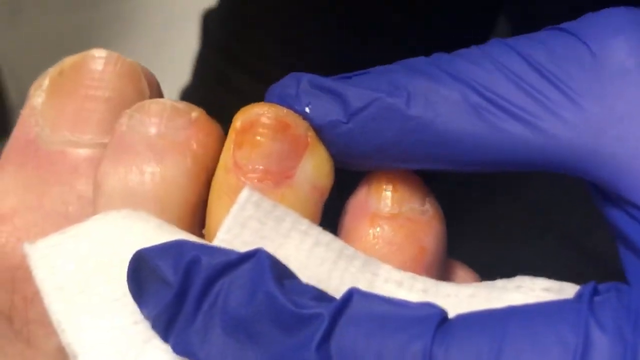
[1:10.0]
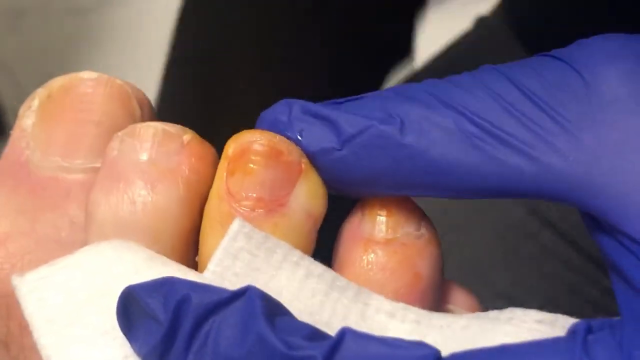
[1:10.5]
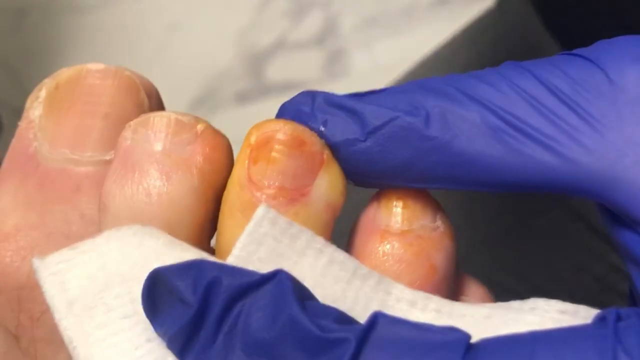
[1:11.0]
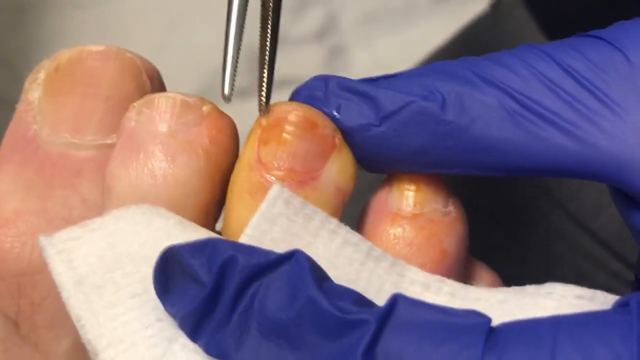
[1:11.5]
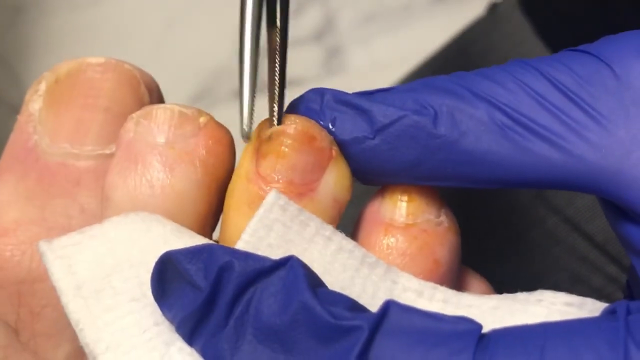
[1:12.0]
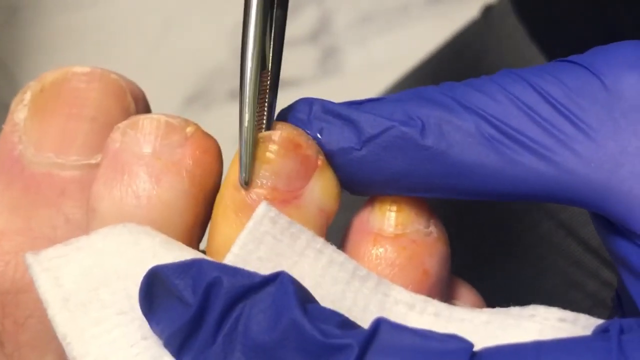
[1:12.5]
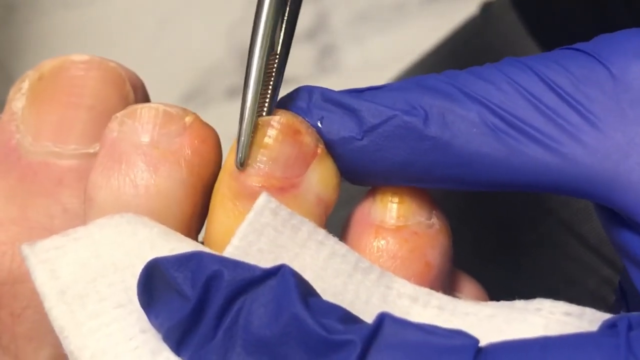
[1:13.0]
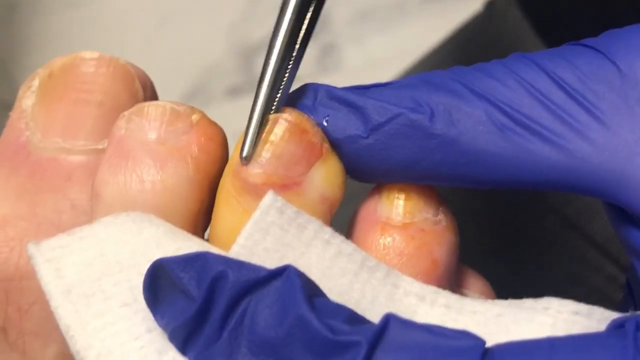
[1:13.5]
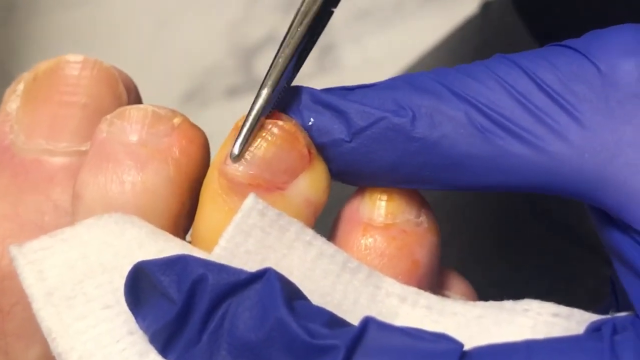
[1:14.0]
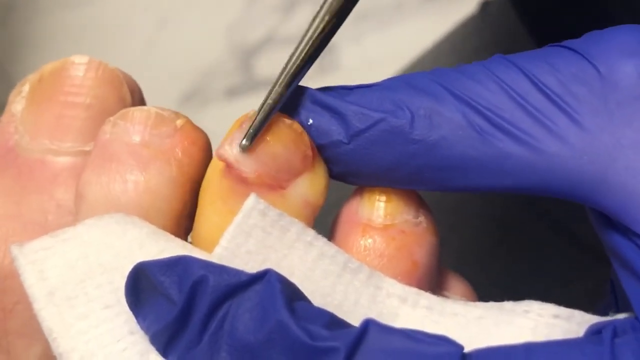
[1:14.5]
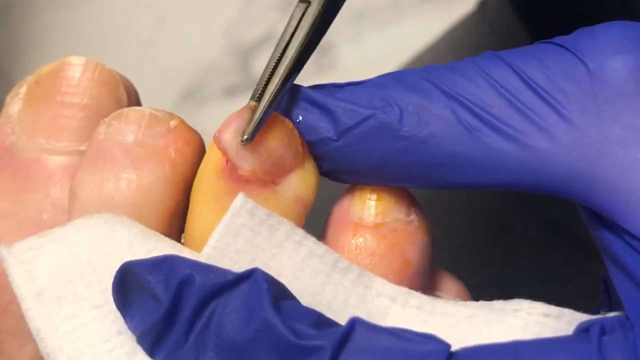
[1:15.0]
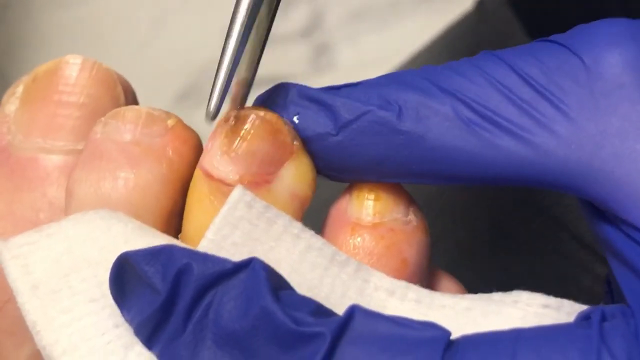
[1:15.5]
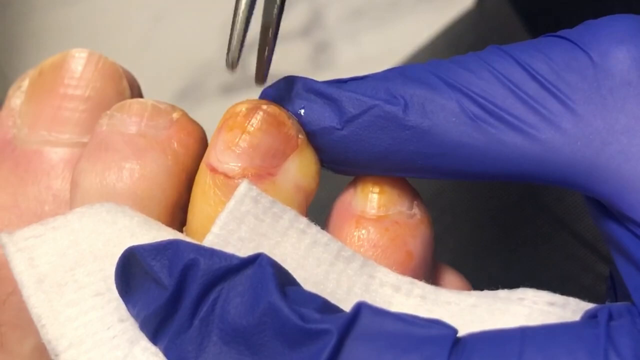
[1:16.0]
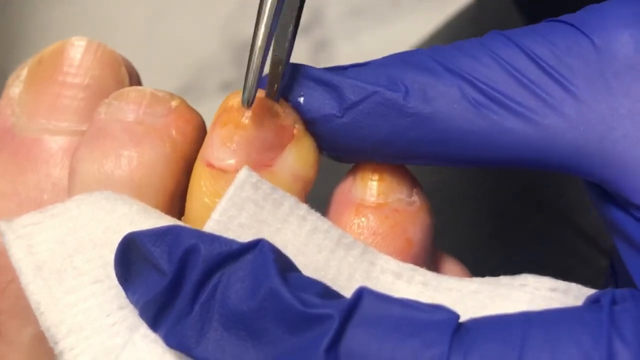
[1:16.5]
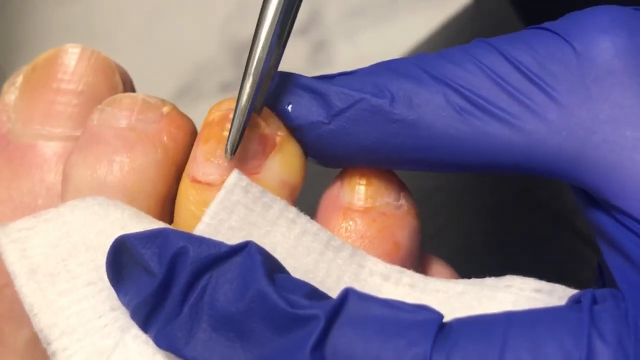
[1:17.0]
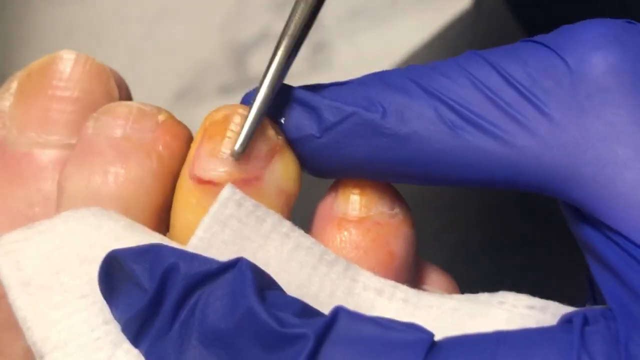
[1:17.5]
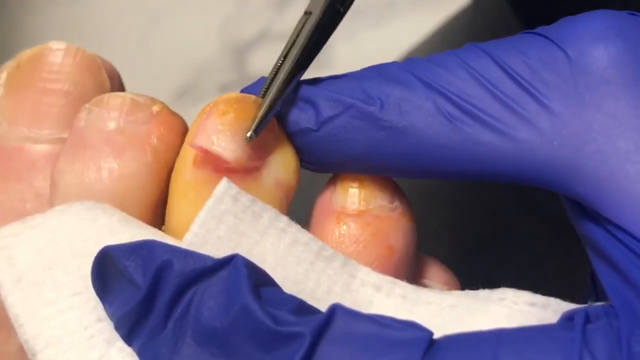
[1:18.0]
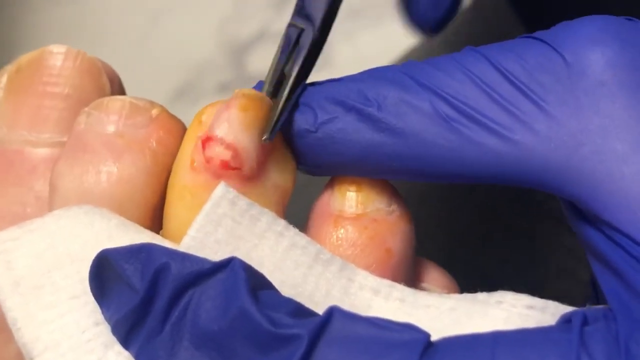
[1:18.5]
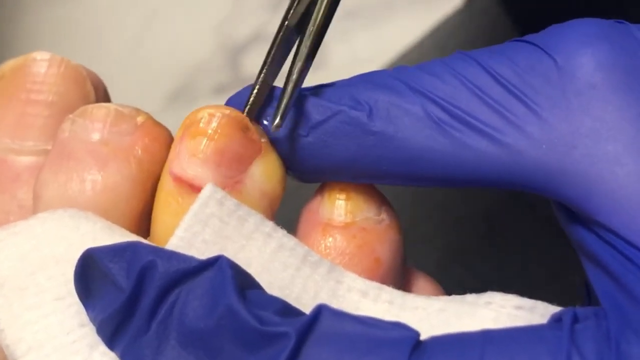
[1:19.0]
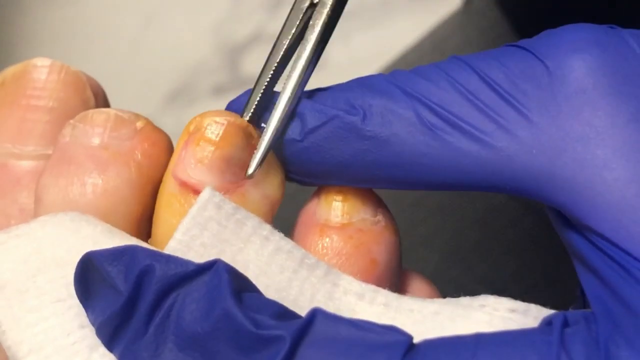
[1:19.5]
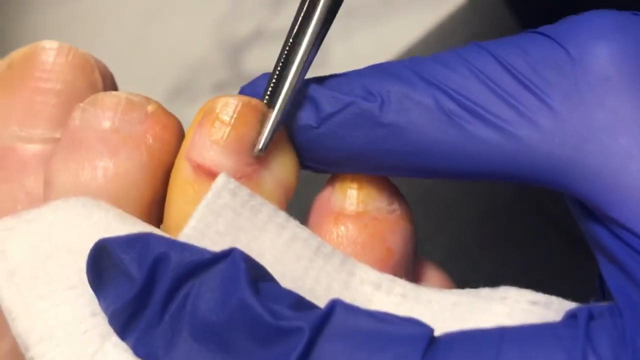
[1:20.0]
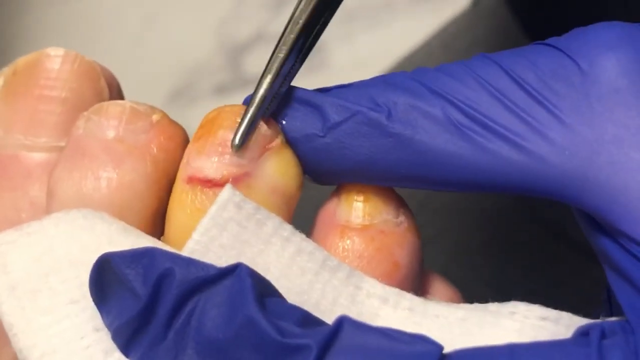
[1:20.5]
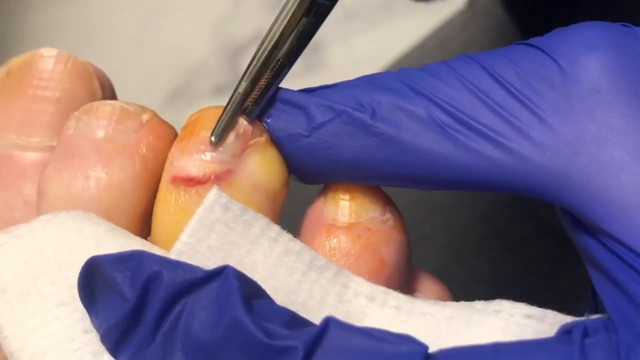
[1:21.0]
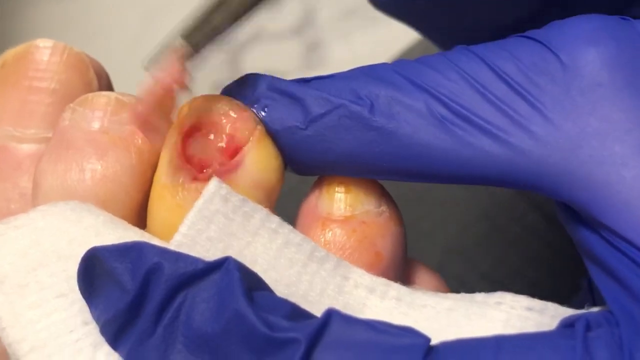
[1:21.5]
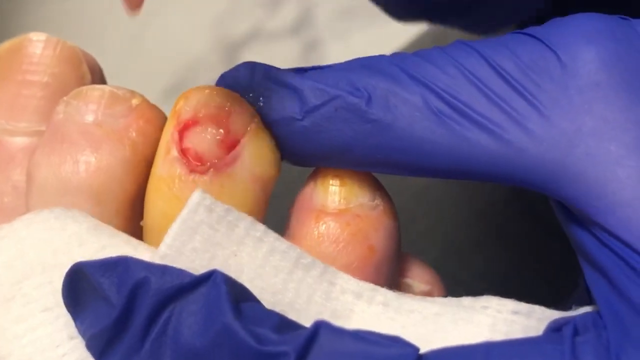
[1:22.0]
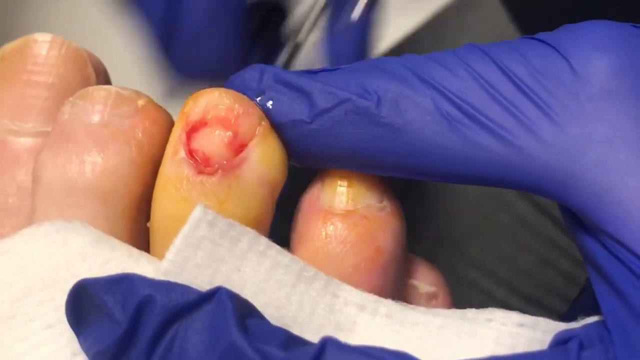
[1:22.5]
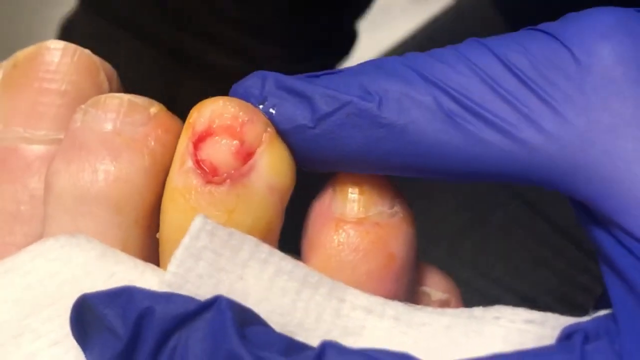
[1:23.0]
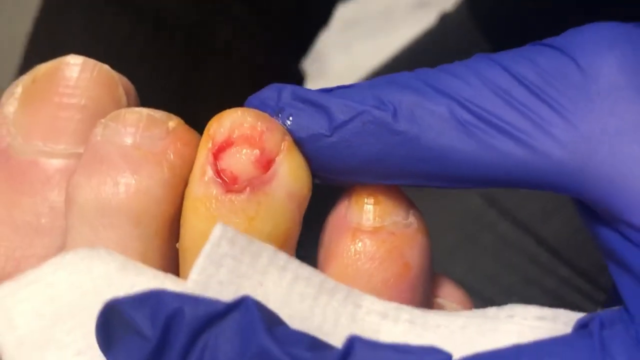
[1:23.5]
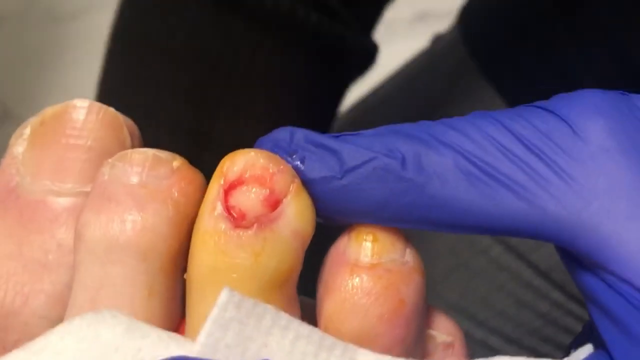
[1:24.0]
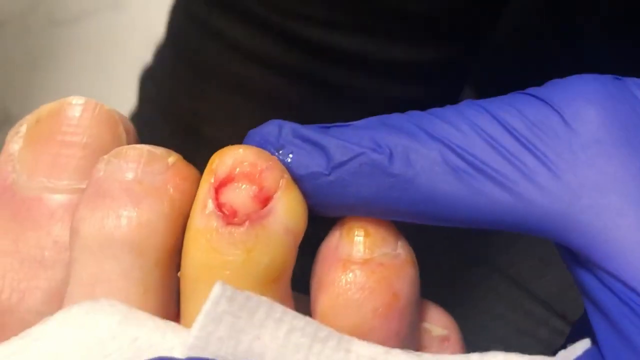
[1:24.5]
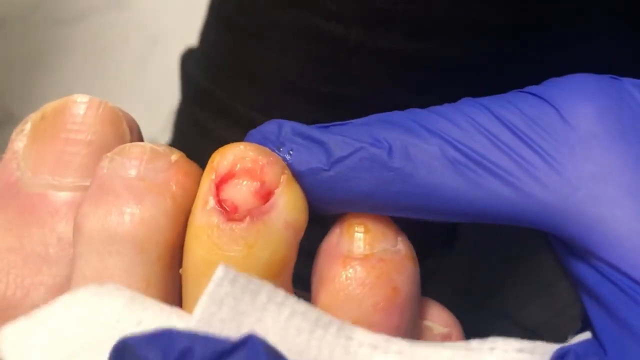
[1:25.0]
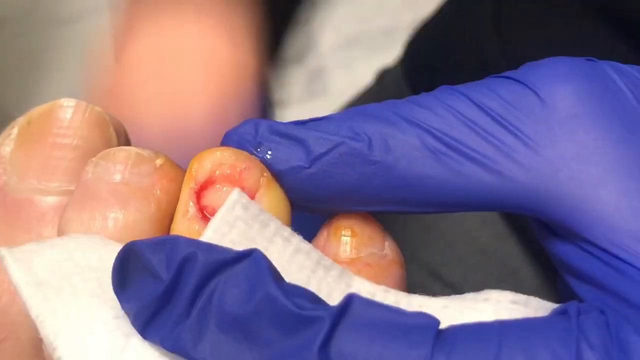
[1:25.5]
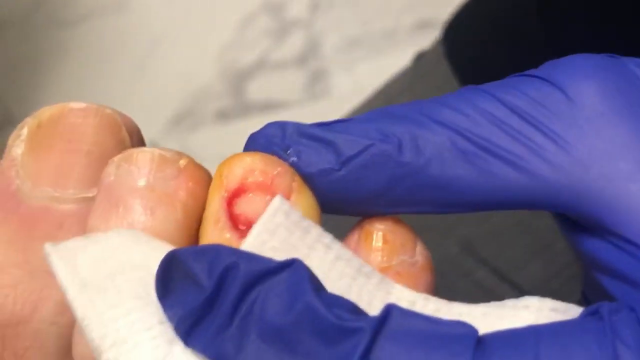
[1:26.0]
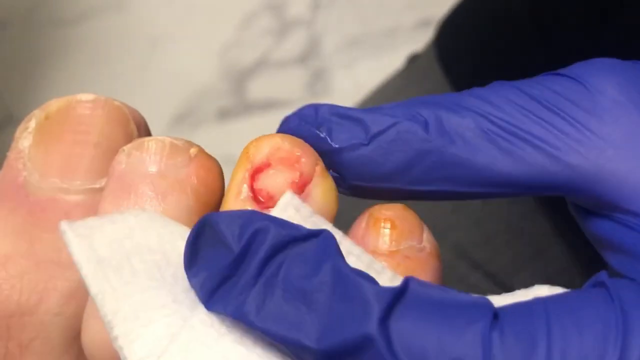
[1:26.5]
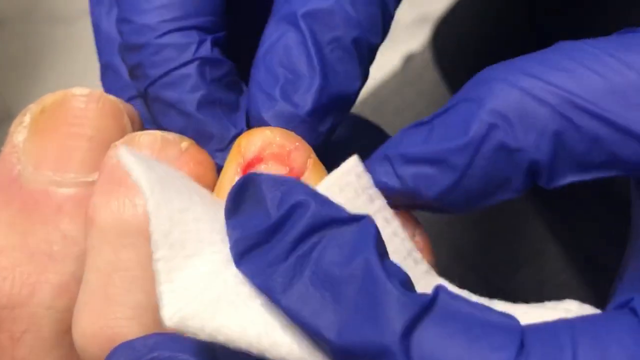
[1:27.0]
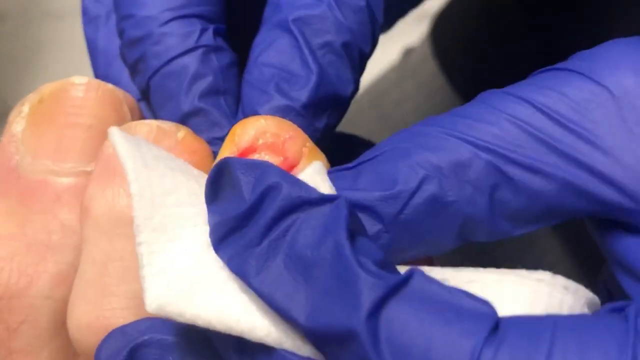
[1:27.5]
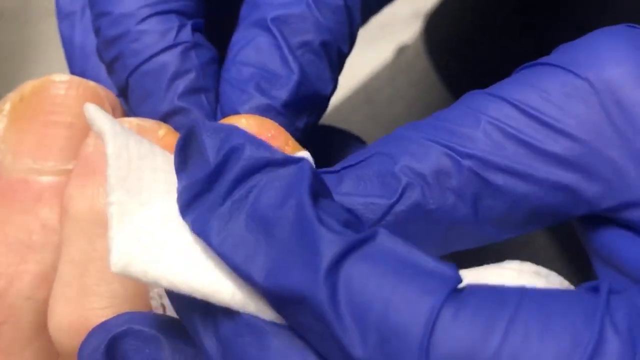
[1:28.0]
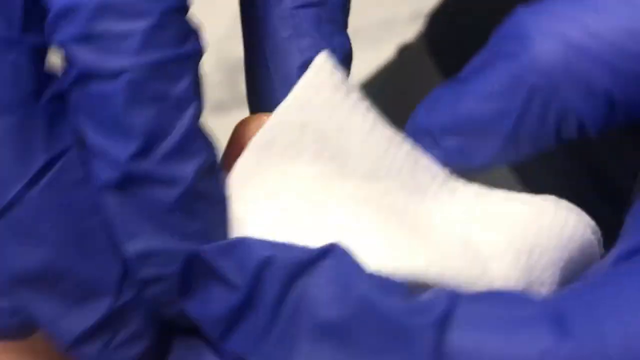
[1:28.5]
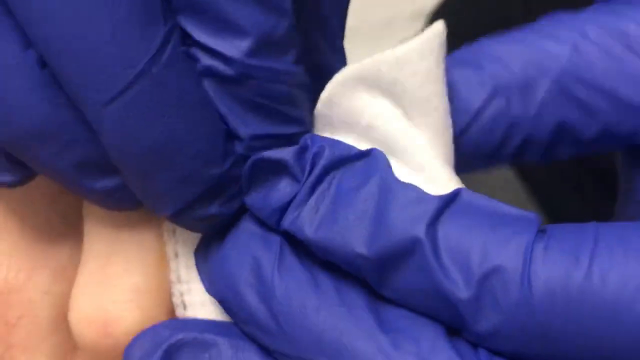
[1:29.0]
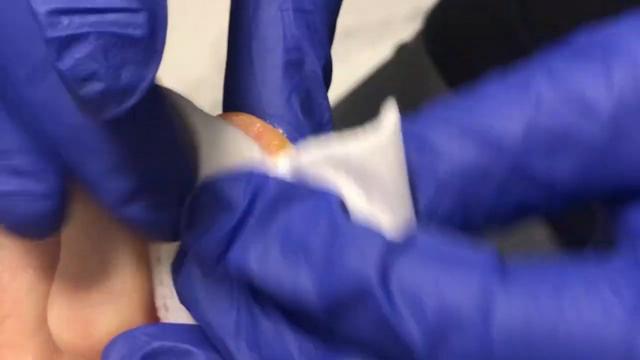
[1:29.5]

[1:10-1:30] Still zoomed in on the toes, the person in dark blue gloves holds the gauze to the foot with their thumb and appears to have switched objects. The new tool looks like a cross between a knife and tweezers; it lacks the pointed end of scissors but has a little jagged edge. They stick it in right where the toenail starts on the foot, push it all the way in, and then gently peel the toenail off in sections, using three separate pulls. Once the toenail is off, a lot of the bloody liquid is visible underneath. They then use the gauze they had been holding to dab the toenail area.